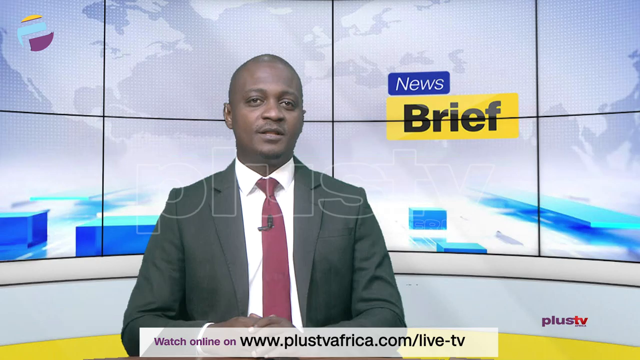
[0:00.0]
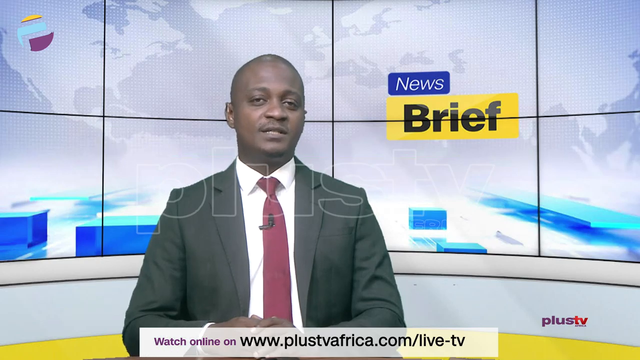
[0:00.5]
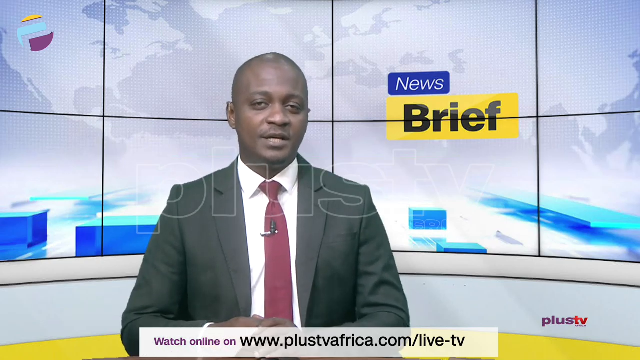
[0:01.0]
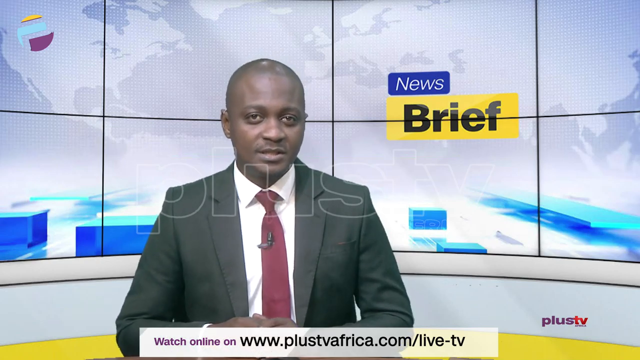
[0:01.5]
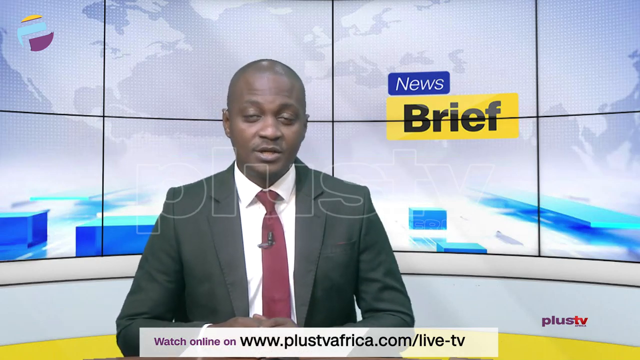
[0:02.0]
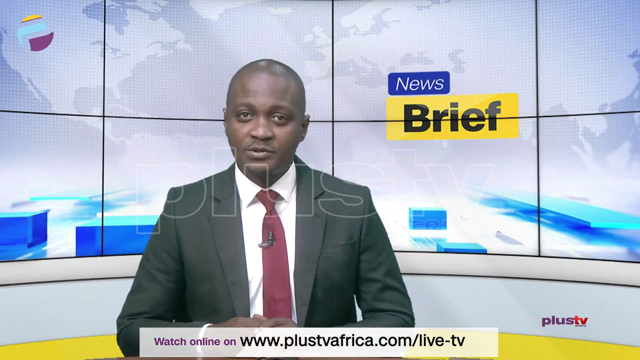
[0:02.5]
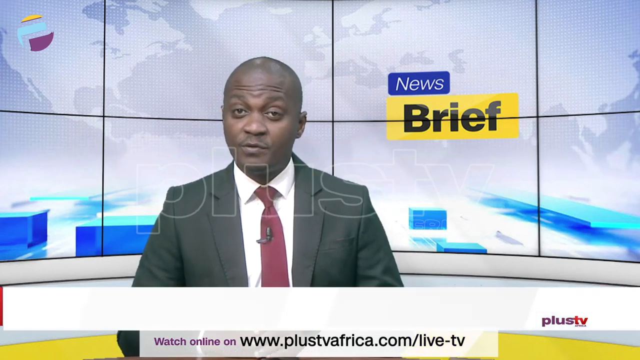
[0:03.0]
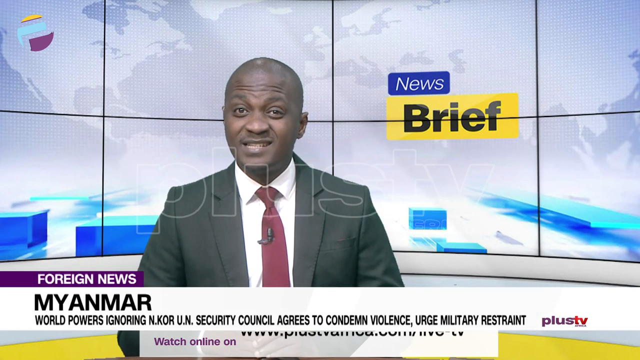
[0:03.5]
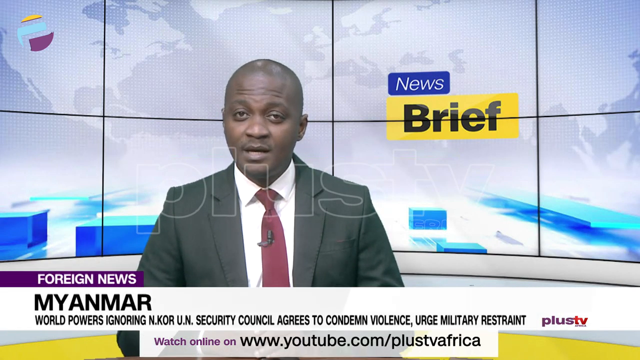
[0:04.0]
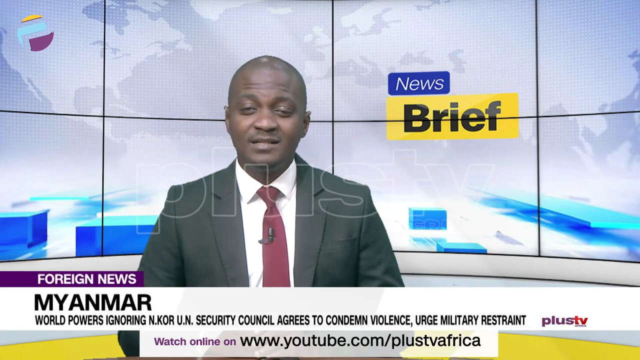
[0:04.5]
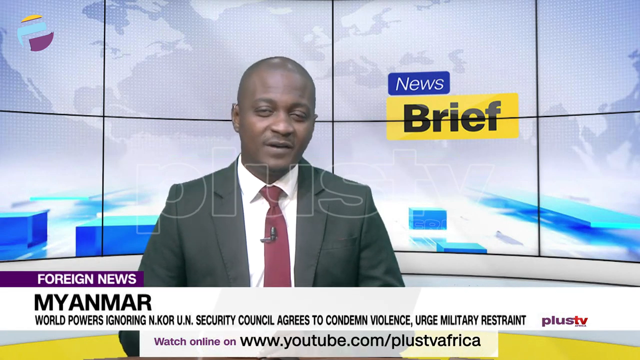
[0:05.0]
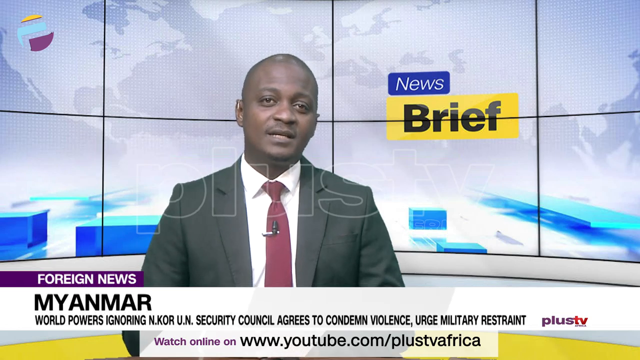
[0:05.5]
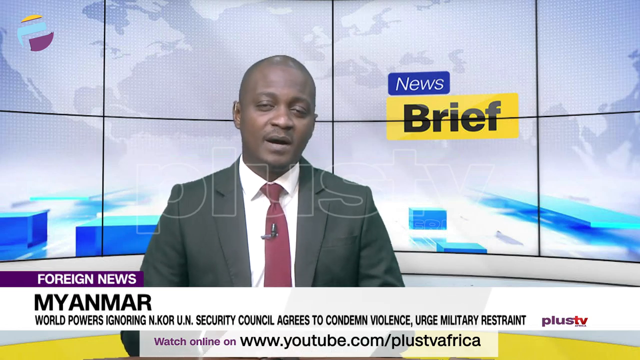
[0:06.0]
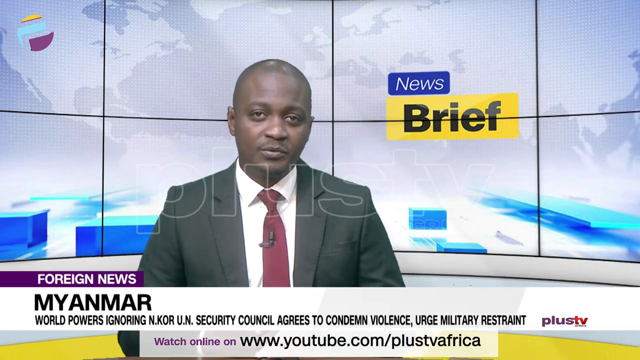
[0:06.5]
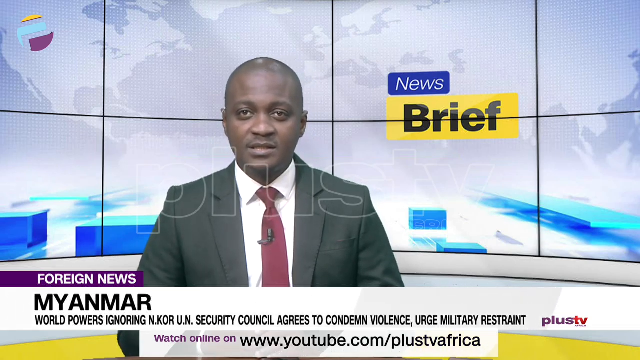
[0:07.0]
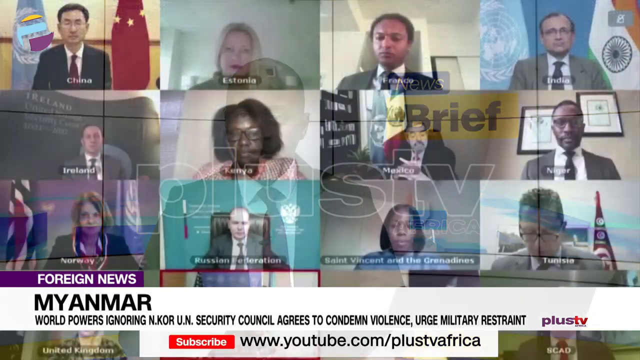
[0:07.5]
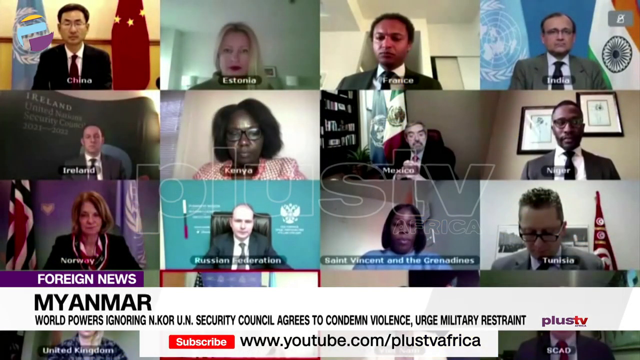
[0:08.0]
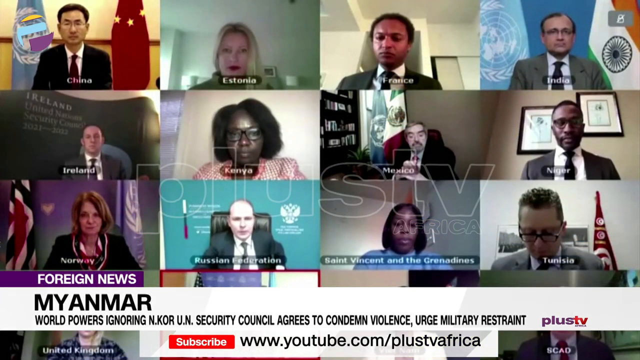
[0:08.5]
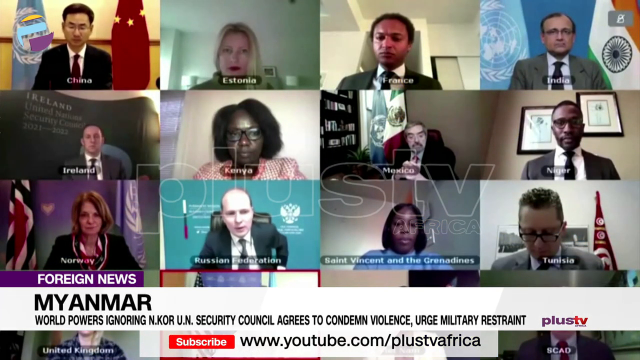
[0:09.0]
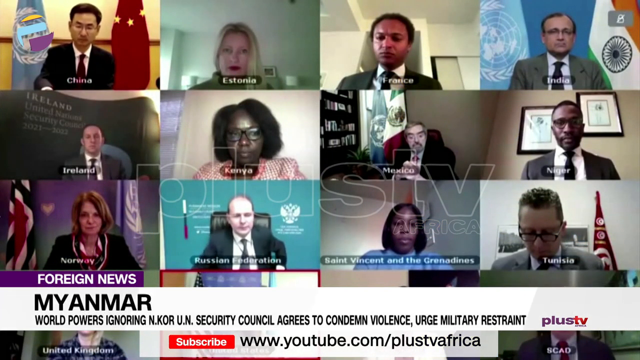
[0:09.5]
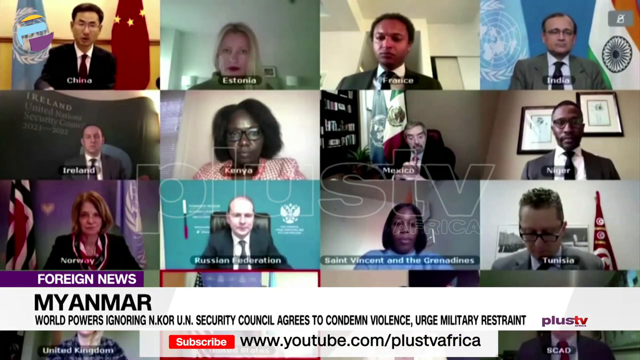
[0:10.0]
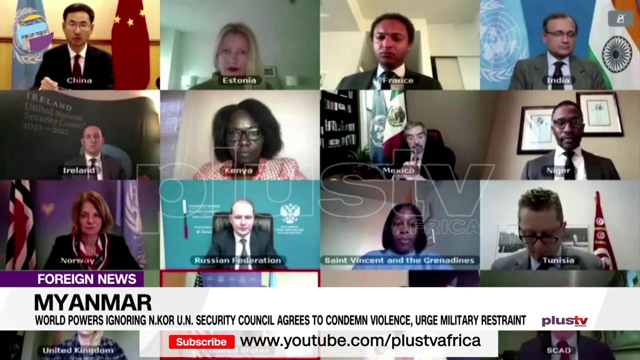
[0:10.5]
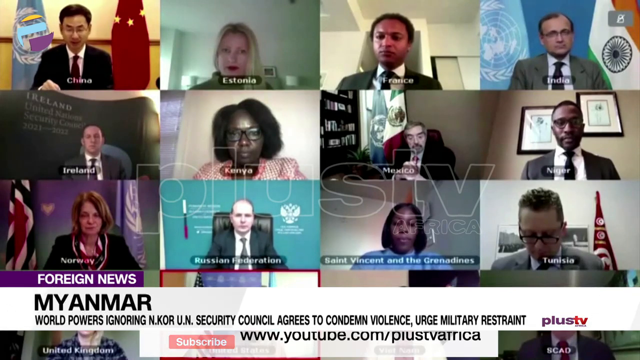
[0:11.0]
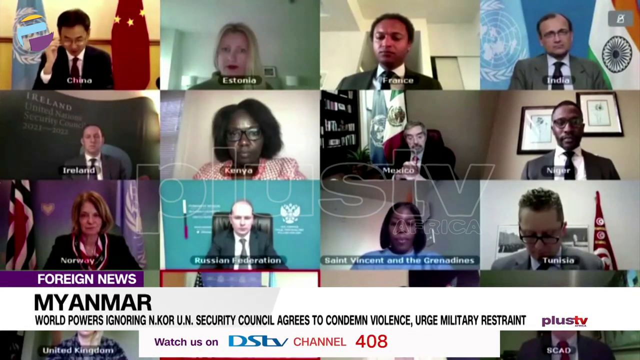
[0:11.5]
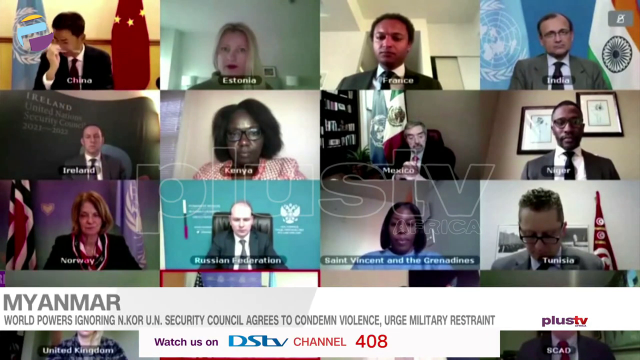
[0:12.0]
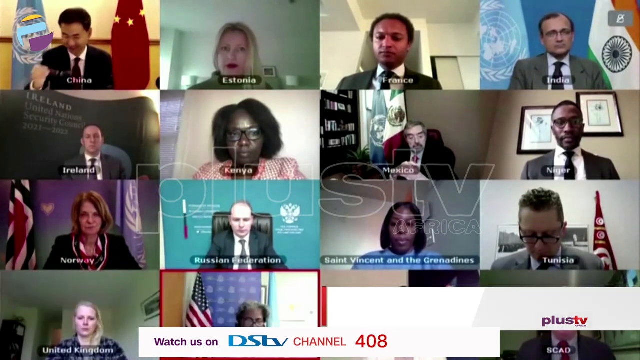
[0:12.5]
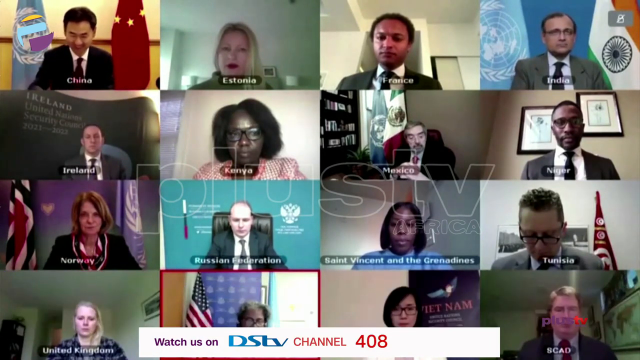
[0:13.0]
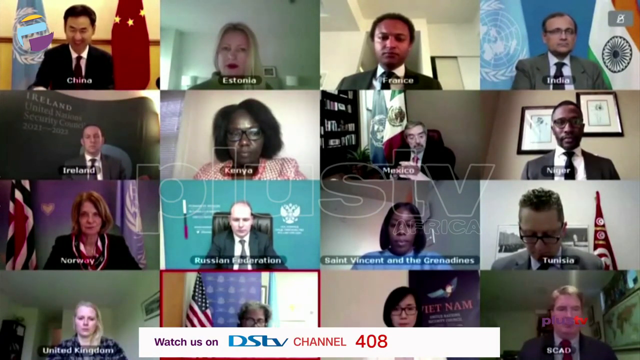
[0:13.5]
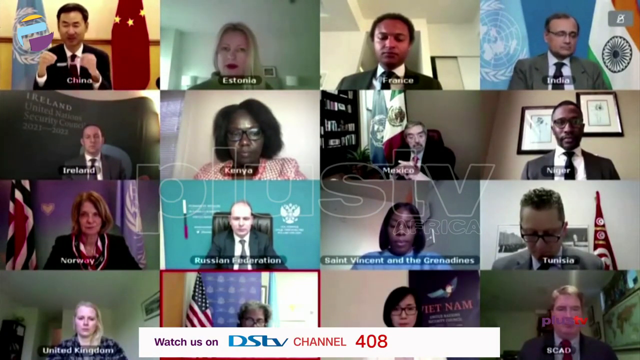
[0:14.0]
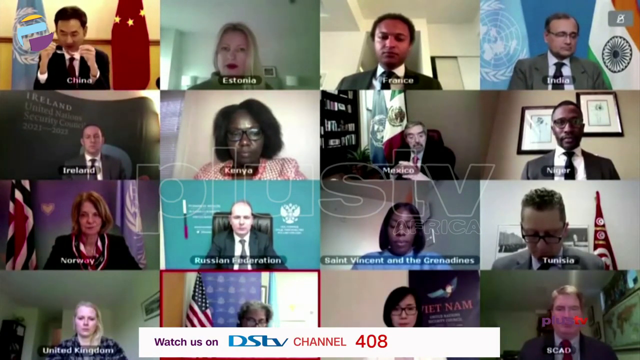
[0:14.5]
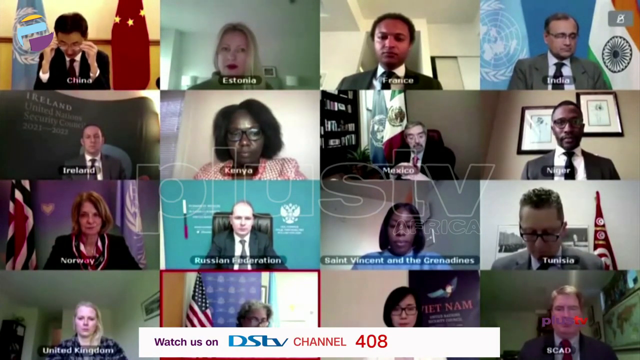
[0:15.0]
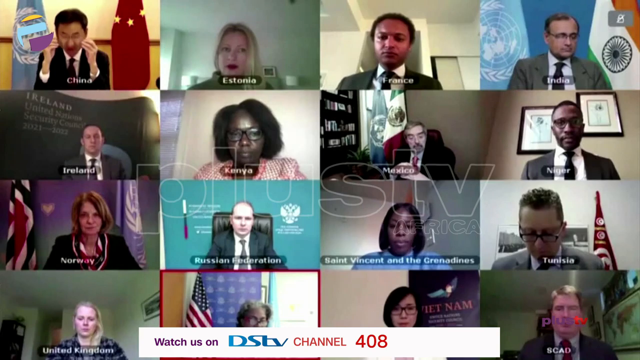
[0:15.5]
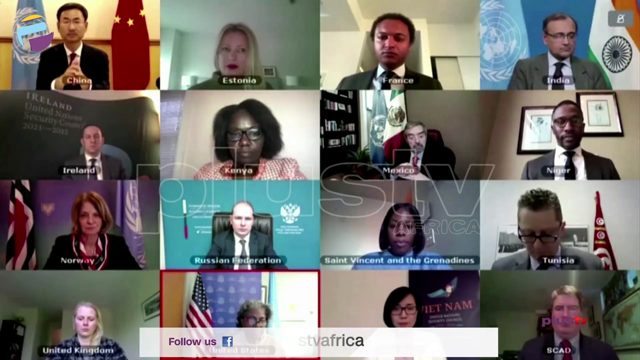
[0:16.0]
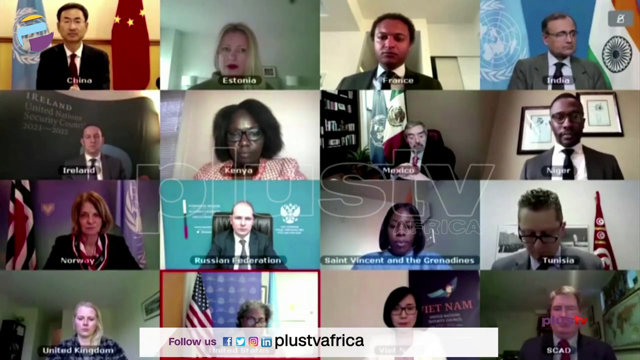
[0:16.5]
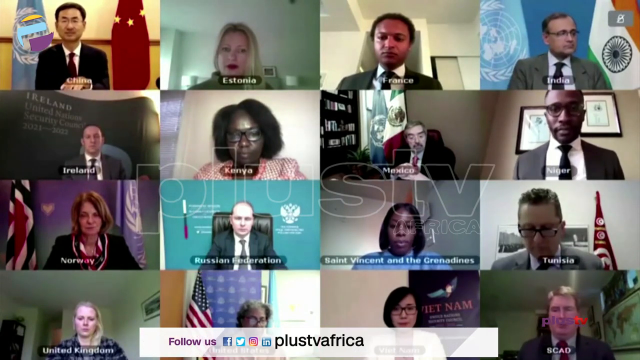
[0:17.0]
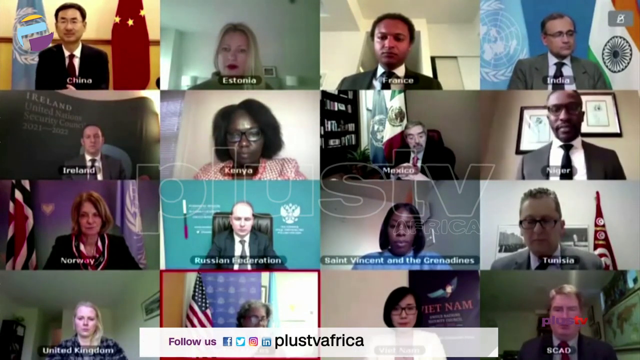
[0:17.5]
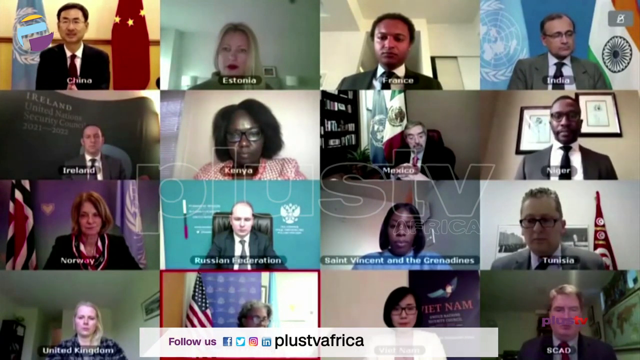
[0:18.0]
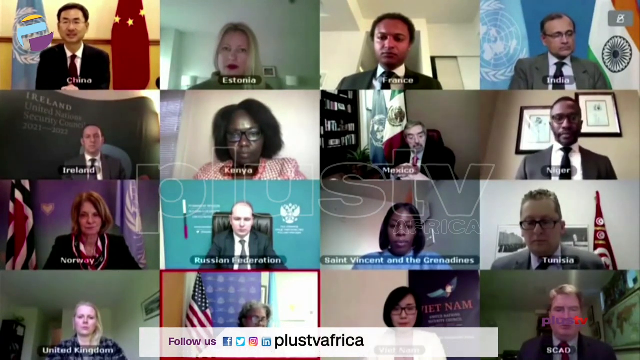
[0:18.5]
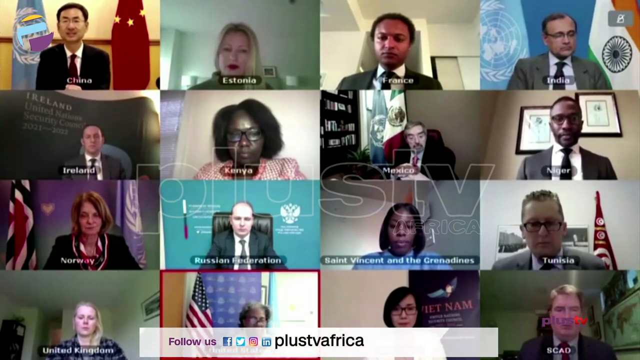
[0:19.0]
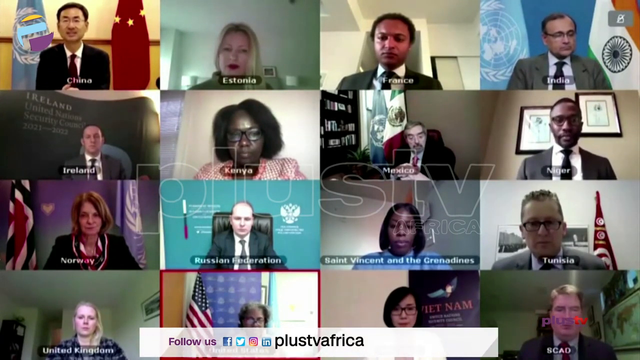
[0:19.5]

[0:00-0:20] An African American man in a suit and tie speaks directly to the audience in what appears to be a professional newscaster-type setting. A lapel microphone is clipped onto his tie. Behind him is a computerized background showing an outline of different countries of the world, with the news program's emblem in the upper left-hand corner. Immediately to the right of his head is the text "News brief", and near the lower right-hand corner is the logo for the news program. An outlined watermark text is over the video as he speaks, and brief text at the bottom tells viewers a website where they can watch the program online. The first topic is Myanmar, under the title "Foreign news".